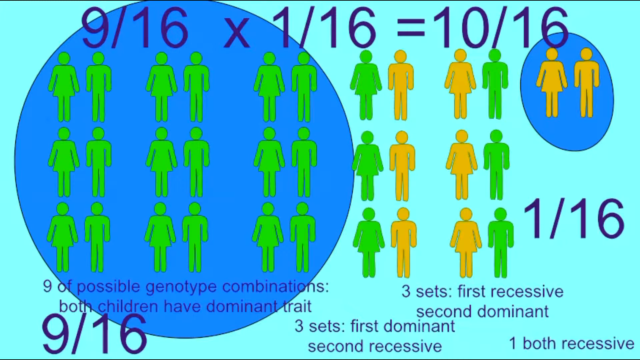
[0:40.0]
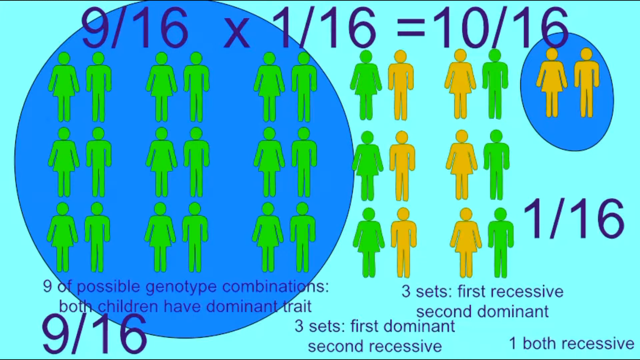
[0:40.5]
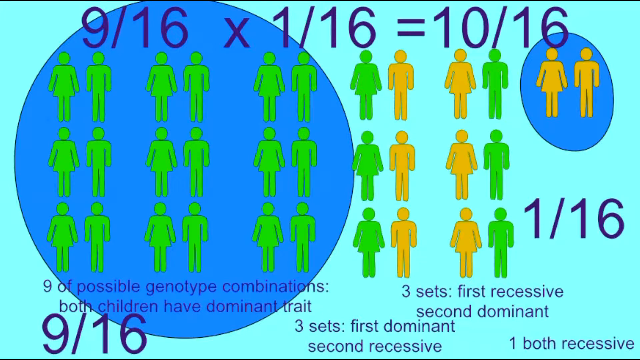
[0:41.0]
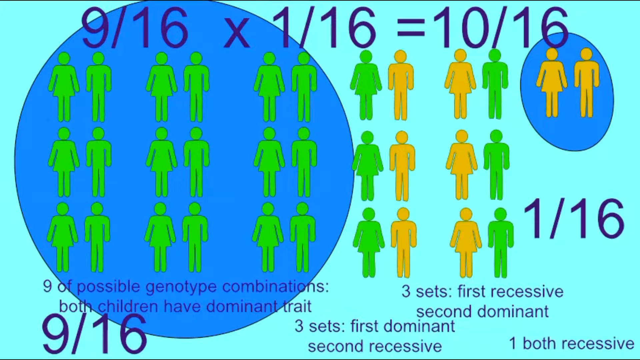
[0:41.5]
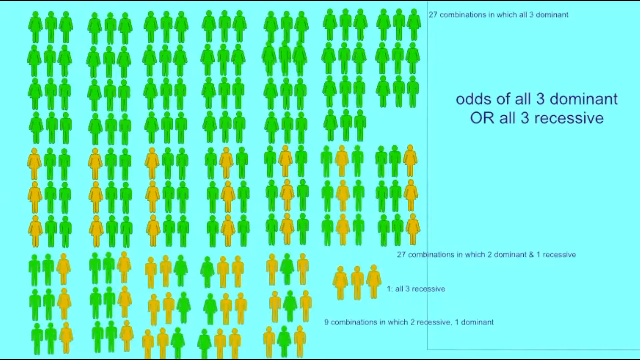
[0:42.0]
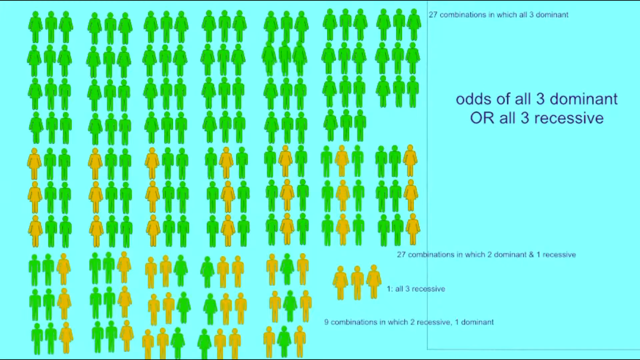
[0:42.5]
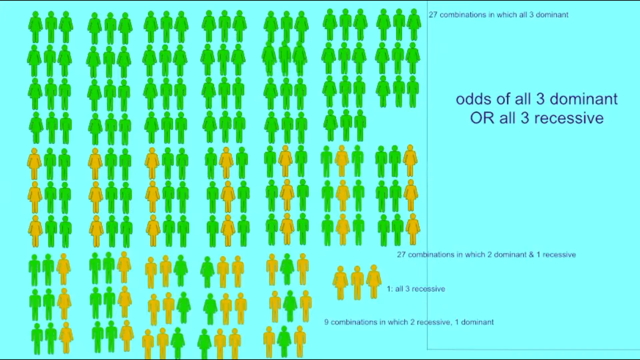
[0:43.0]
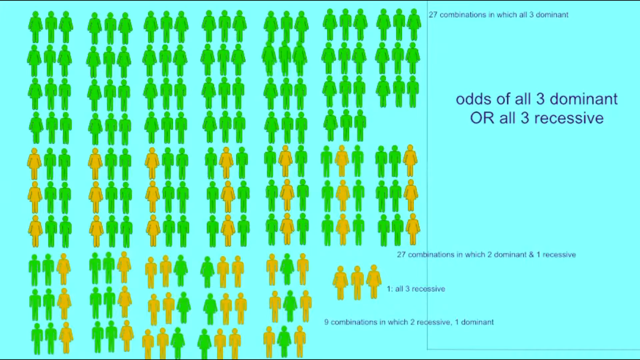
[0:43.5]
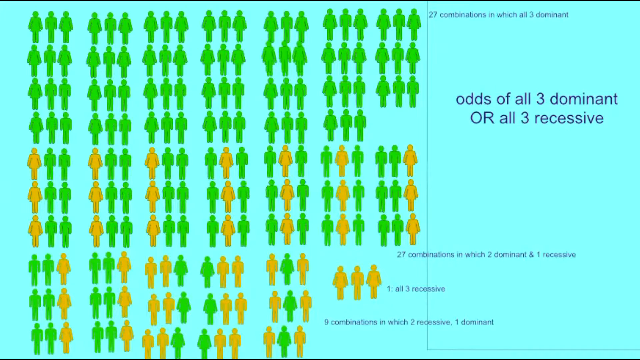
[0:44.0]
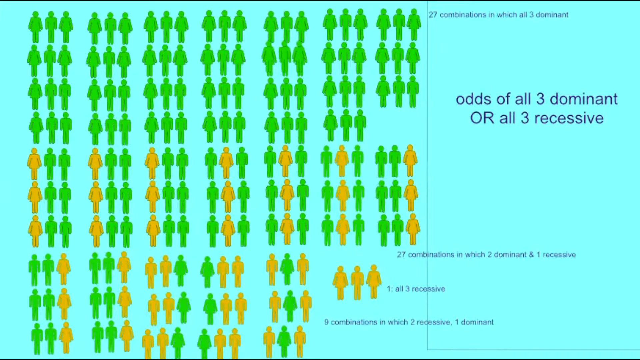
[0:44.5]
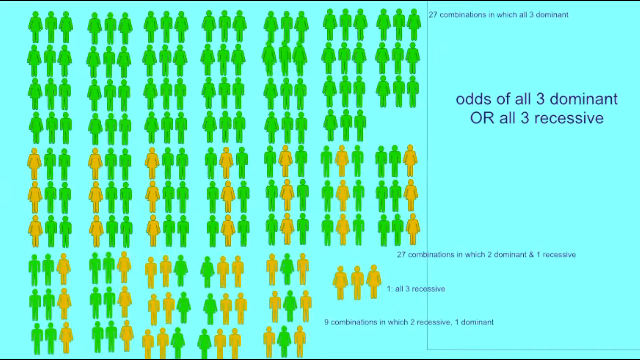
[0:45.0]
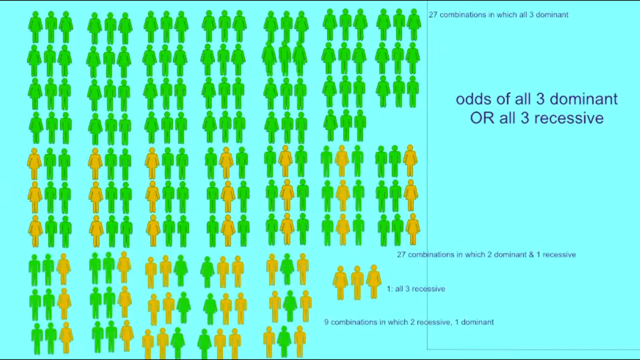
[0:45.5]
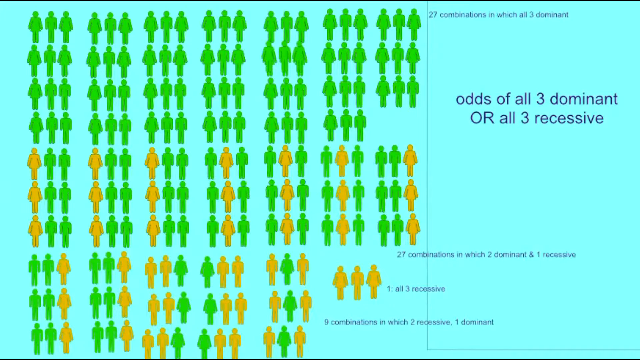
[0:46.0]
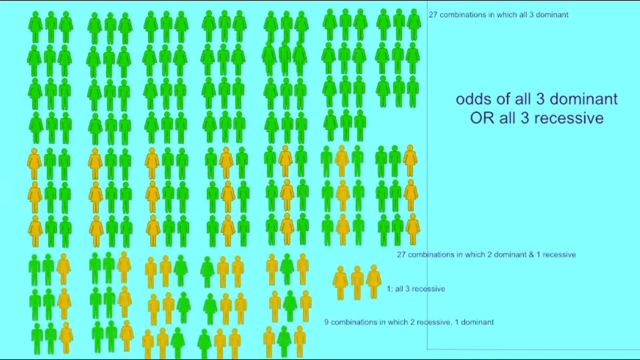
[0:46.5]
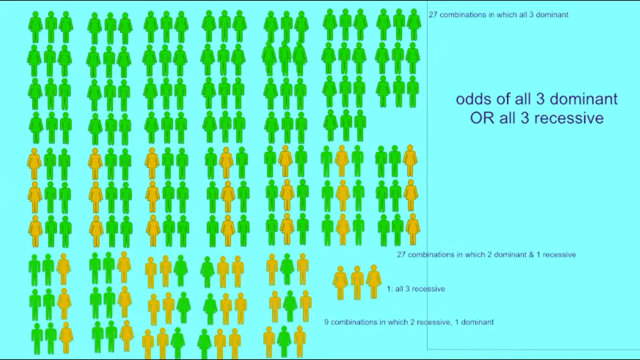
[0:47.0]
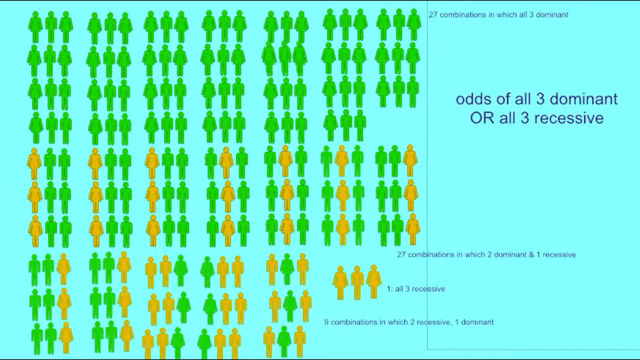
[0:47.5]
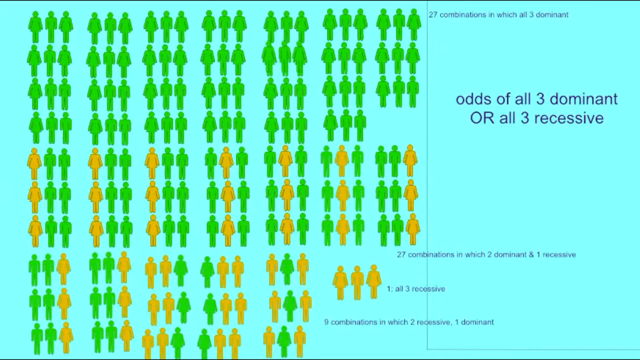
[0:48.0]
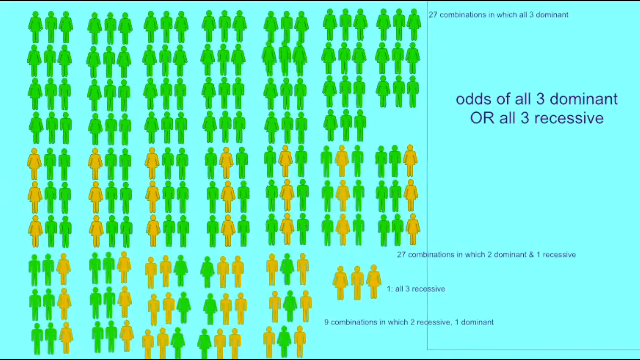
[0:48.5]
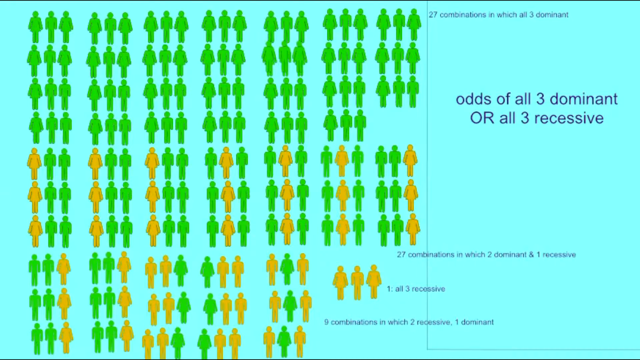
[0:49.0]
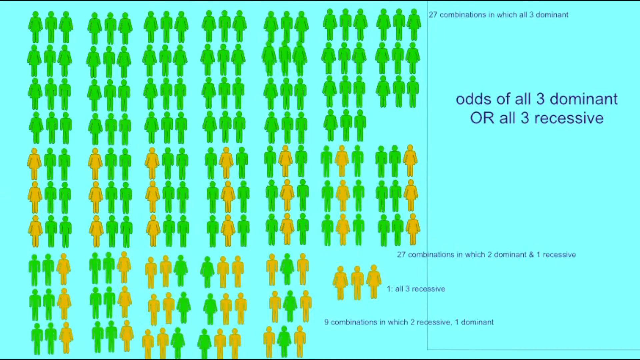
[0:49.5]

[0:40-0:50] The video moves to a much bigger screen showing many combinations of three children: all three dominant, one recessive and two dominant, two recessive and one dominant, and all three recessive. Text on the screen includes "27 combinations in which all three dominant", "odds of all three dominant or all three recessive", and "nine combinations in which two recessive, one dominant". Symbols represent the different traits in each combination rather than a table.